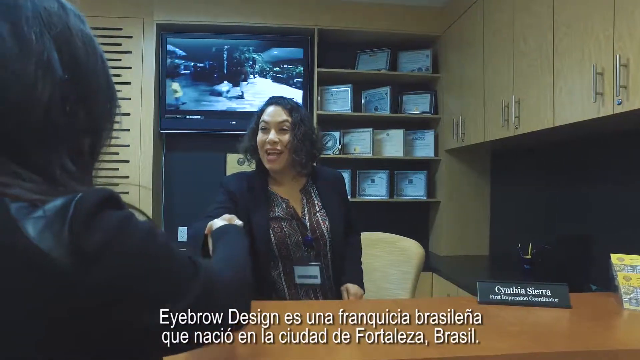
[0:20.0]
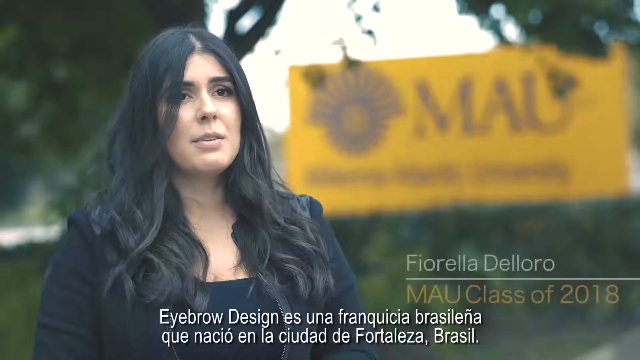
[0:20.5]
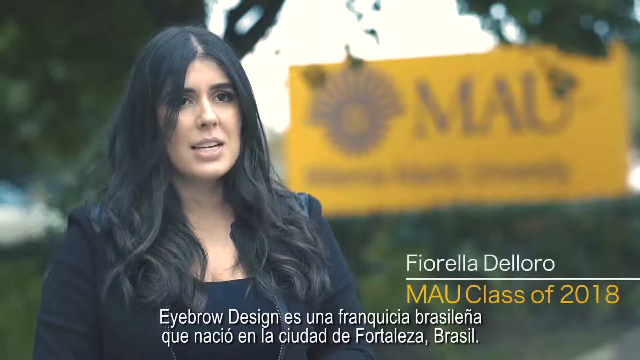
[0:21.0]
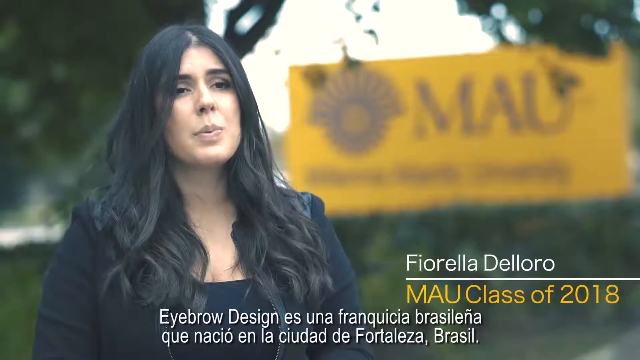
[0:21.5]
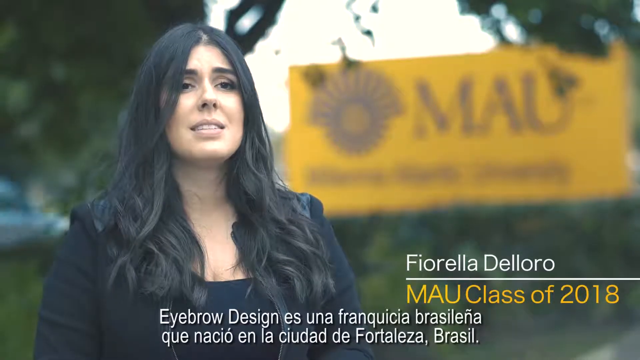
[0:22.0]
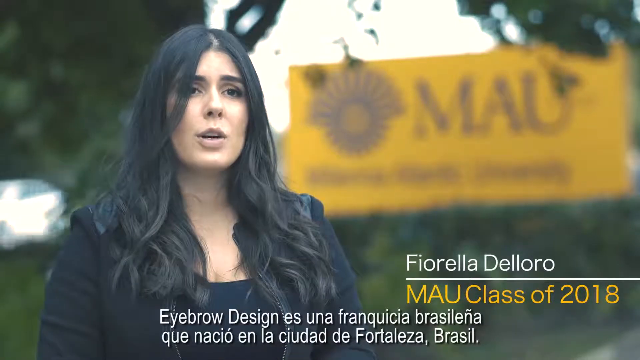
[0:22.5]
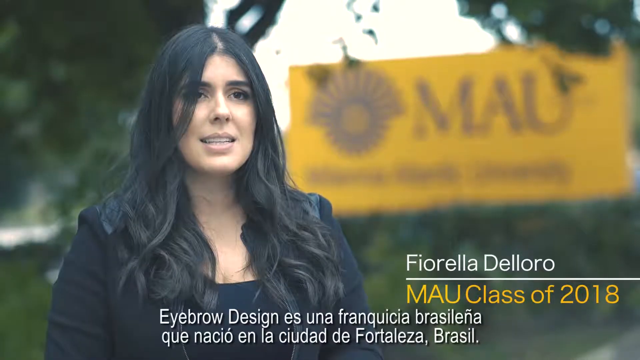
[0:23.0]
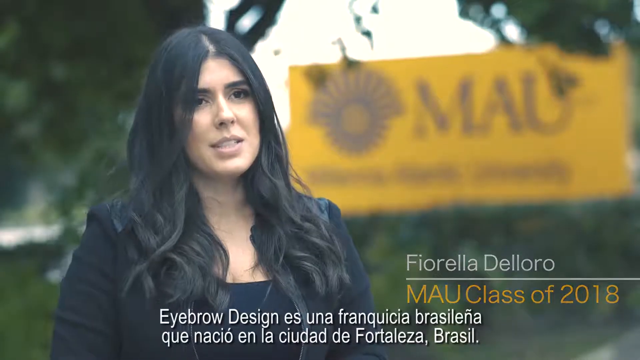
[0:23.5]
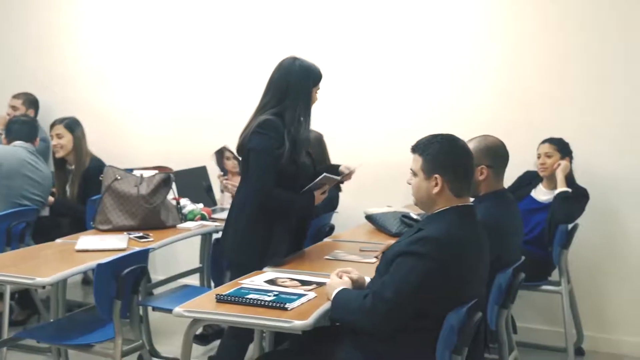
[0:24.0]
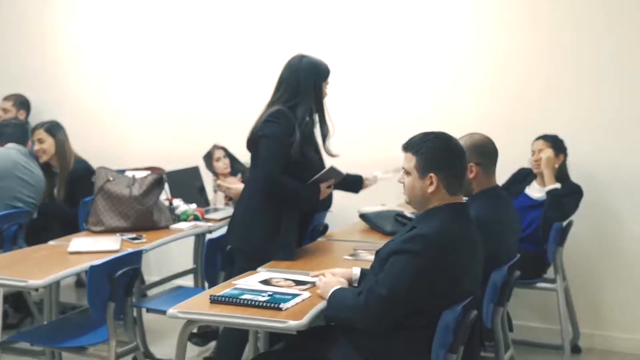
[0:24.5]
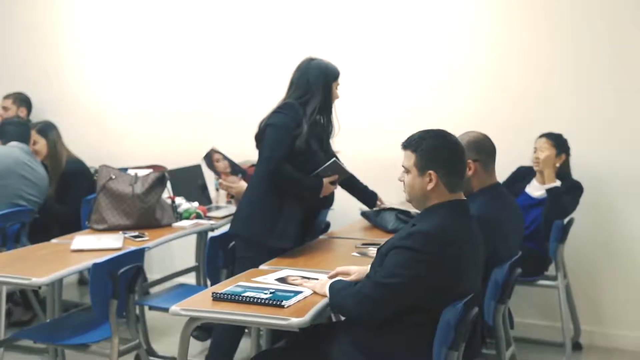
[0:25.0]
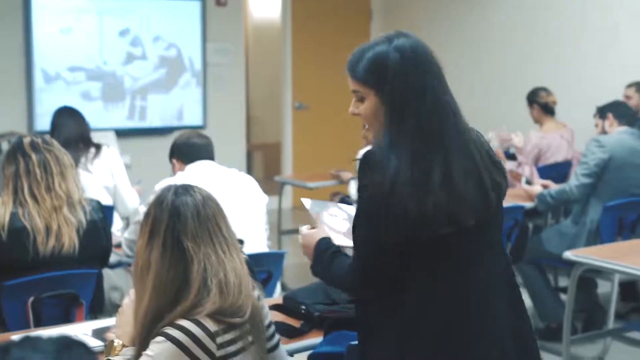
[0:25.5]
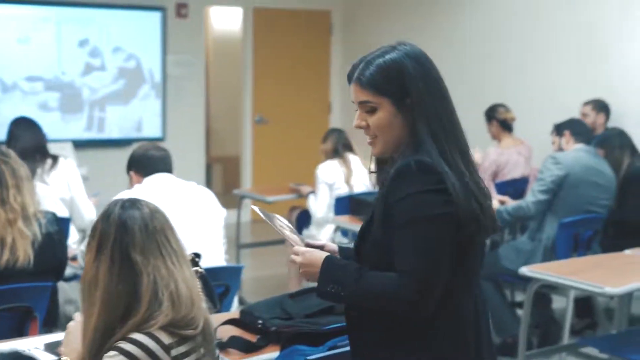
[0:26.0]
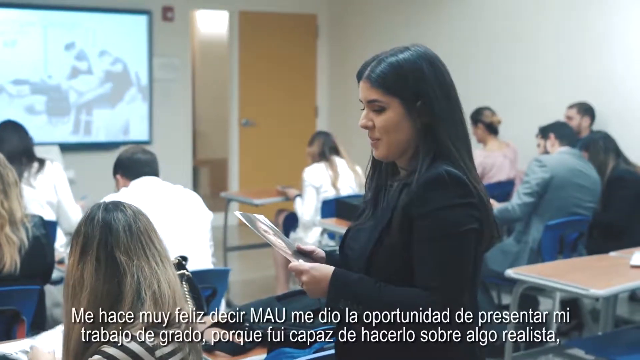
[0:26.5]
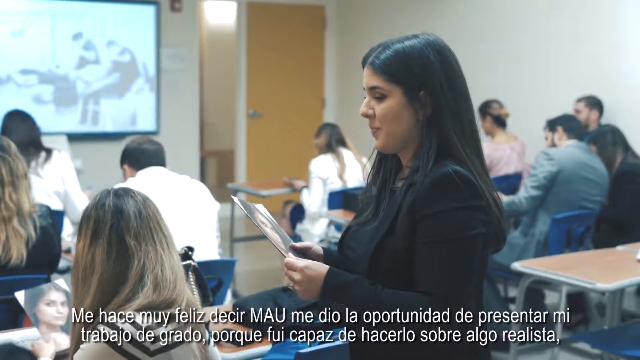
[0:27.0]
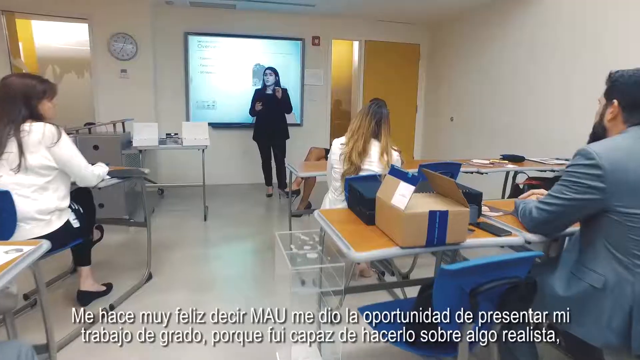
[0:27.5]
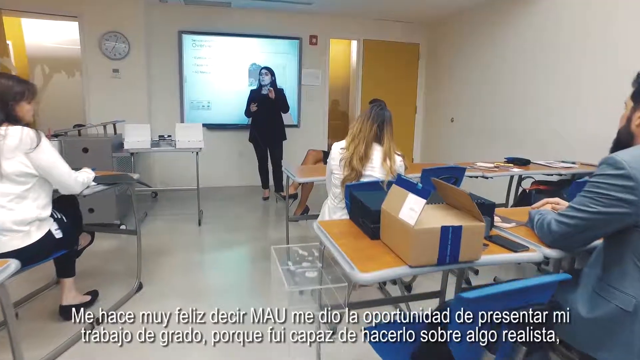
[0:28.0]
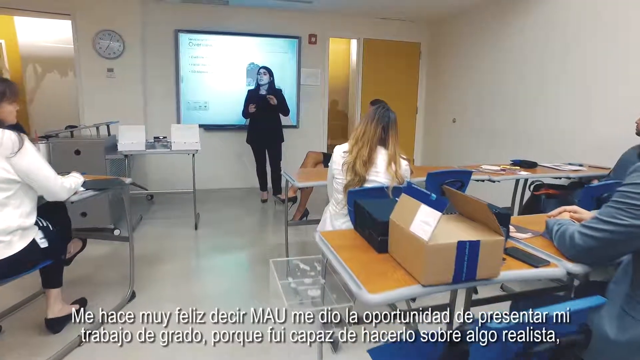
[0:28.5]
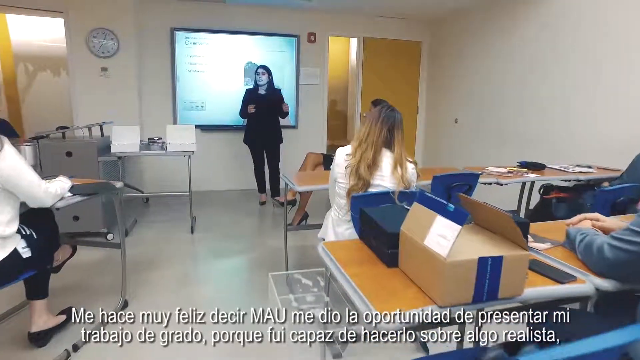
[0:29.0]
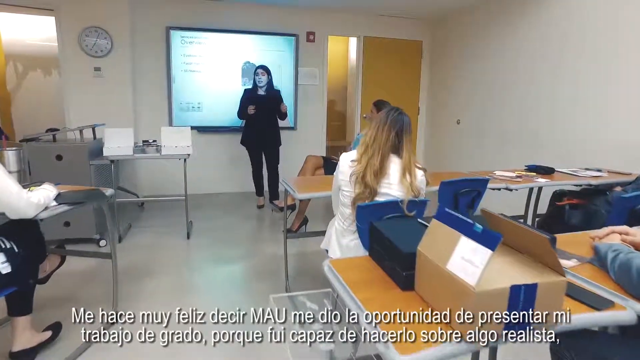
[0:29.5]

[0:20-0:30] The woman and the receptionist shake hands, and then the woman is talking. As she talks, her name is shown on the screen: "Fiorella Delora", "NAU class of 2018". She is wearing black and has brown hair. The scene moves to a classroom, where she gives people some examples with a smile, and titles in another language appear below. It is a classroom of adults; she goes to the front, addresses the classroom and teaches.